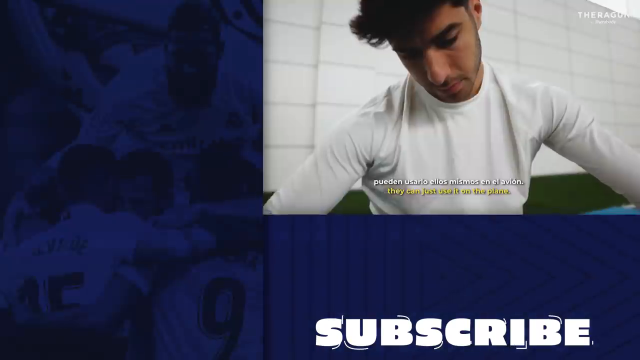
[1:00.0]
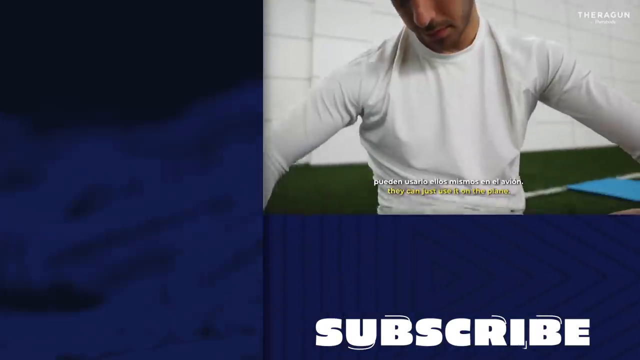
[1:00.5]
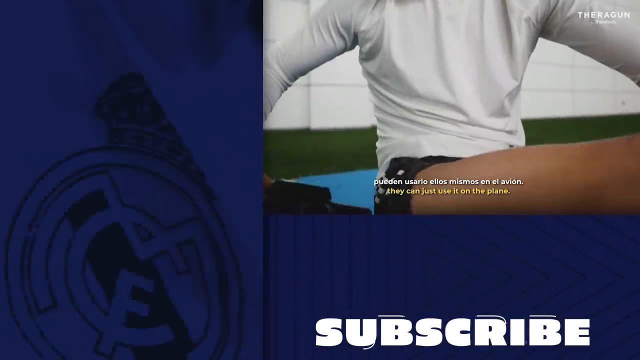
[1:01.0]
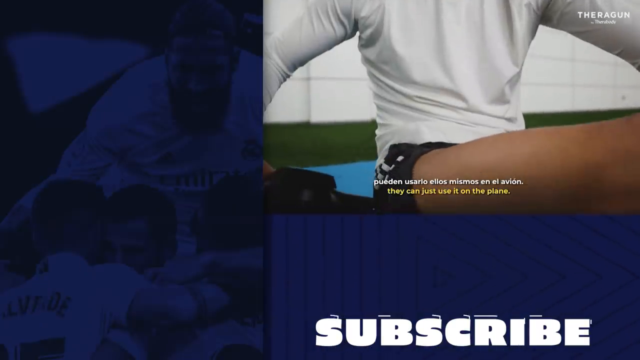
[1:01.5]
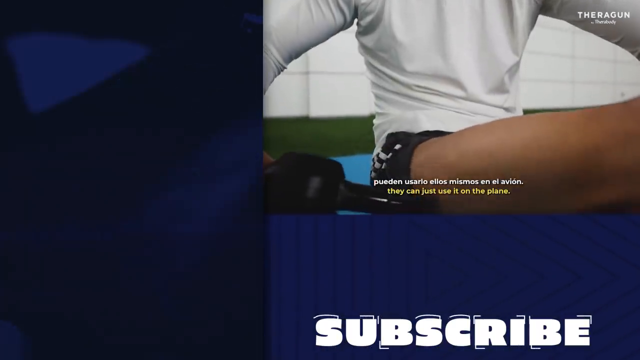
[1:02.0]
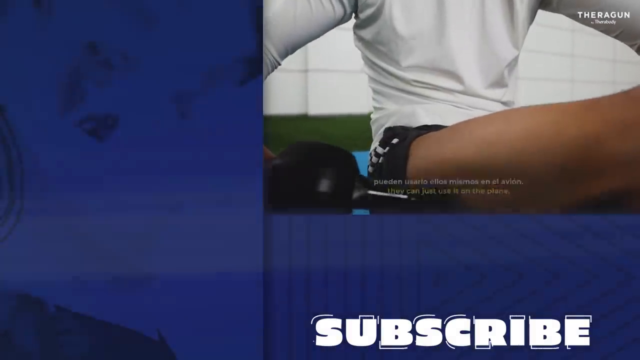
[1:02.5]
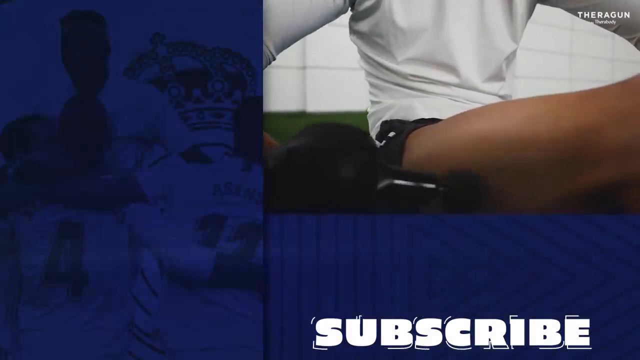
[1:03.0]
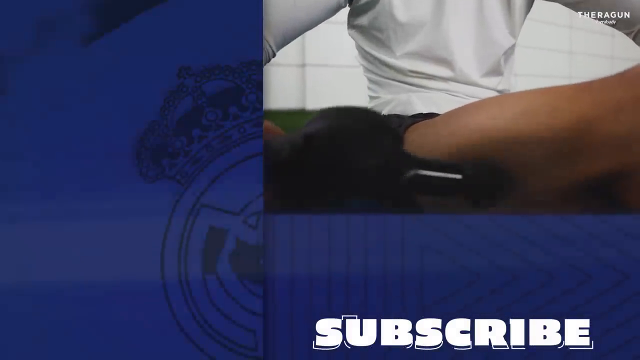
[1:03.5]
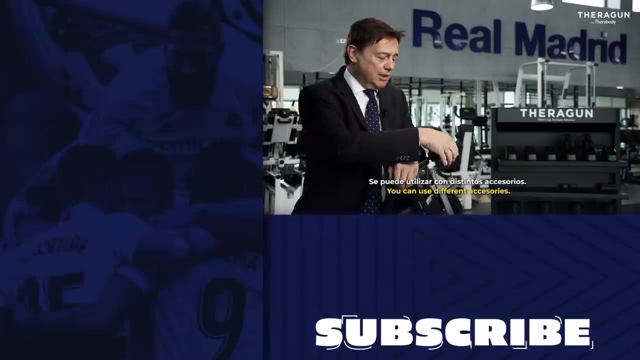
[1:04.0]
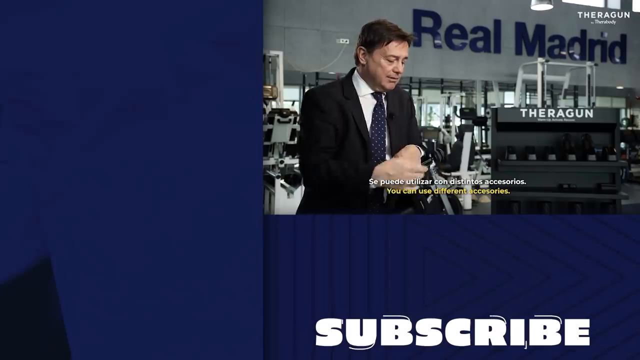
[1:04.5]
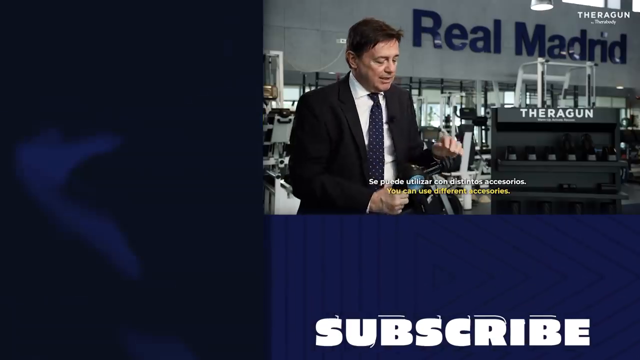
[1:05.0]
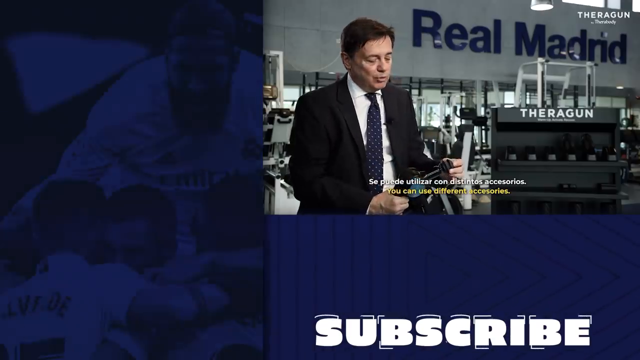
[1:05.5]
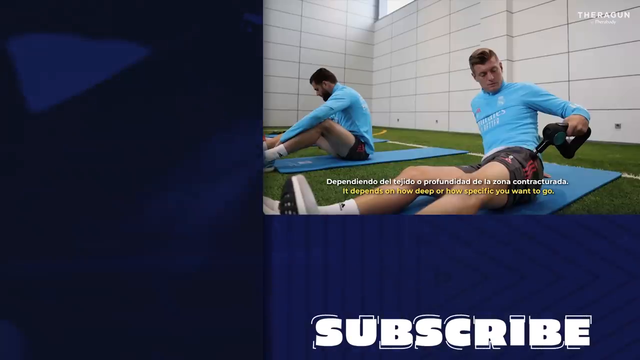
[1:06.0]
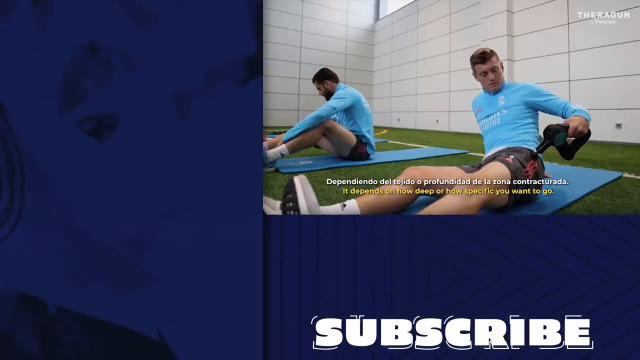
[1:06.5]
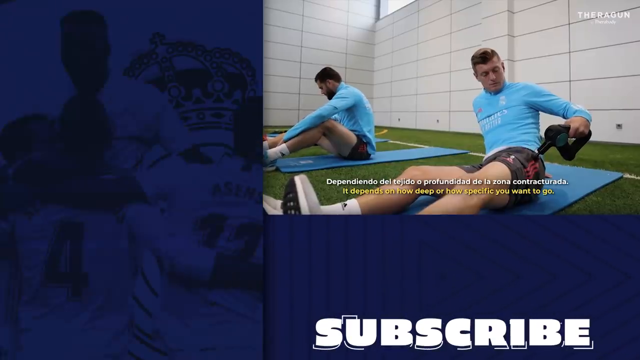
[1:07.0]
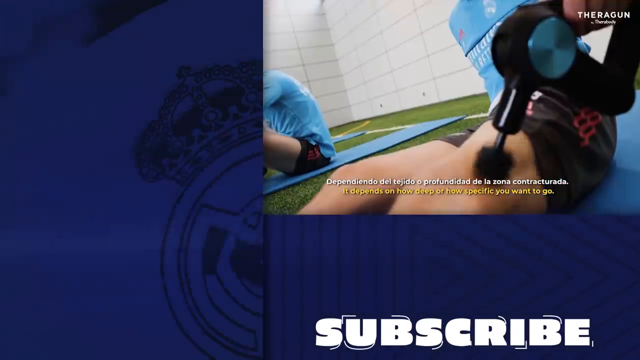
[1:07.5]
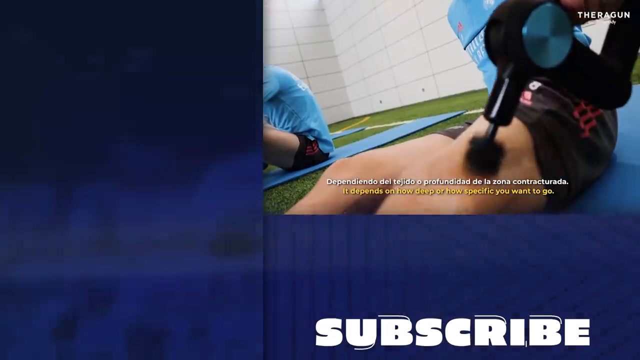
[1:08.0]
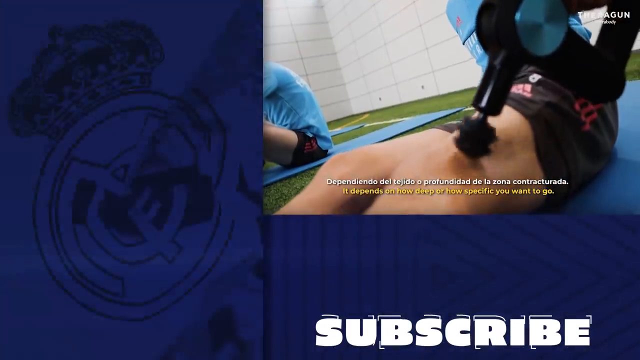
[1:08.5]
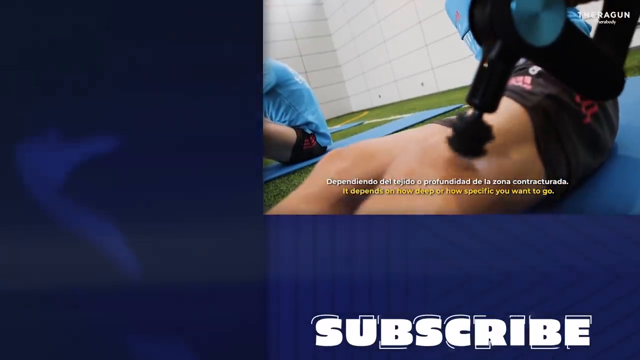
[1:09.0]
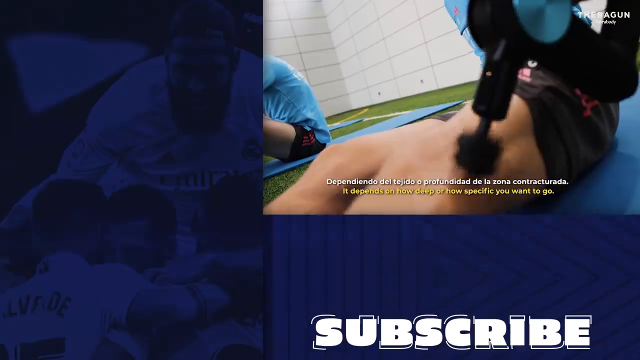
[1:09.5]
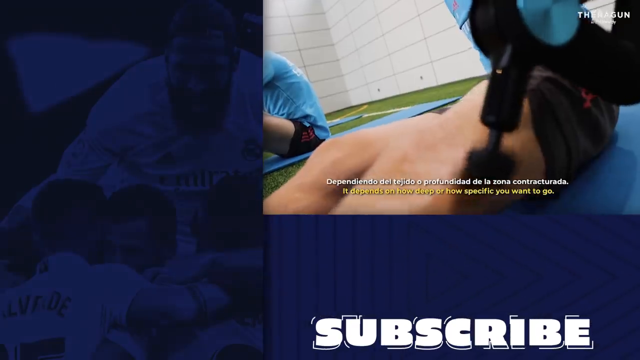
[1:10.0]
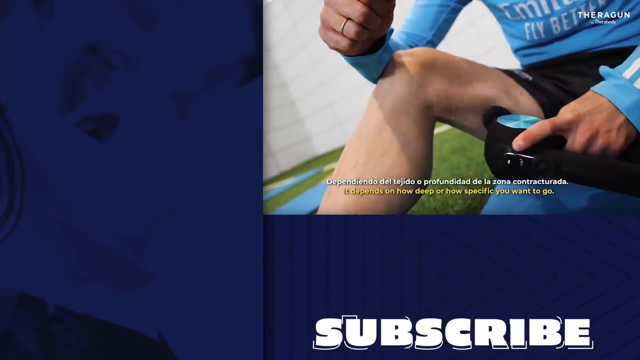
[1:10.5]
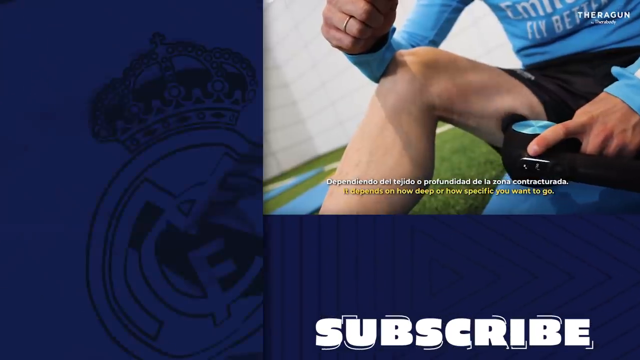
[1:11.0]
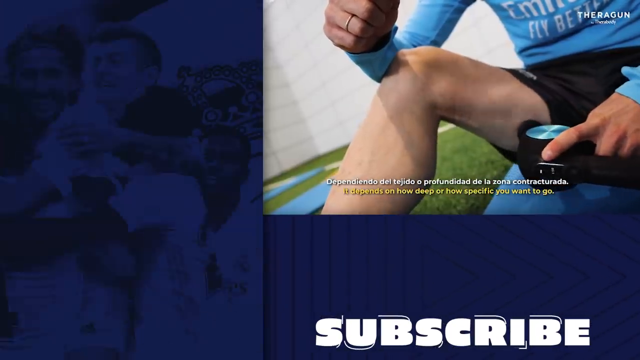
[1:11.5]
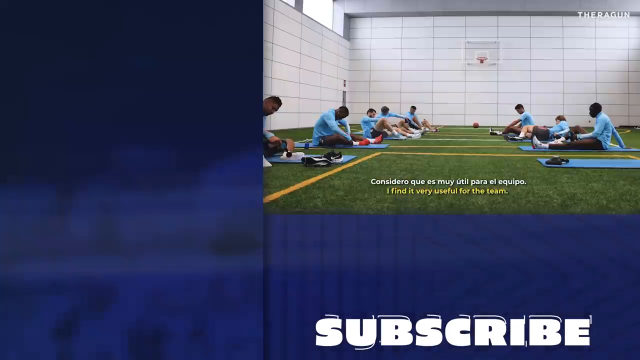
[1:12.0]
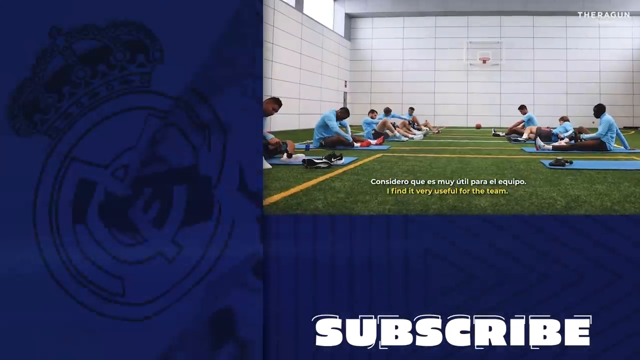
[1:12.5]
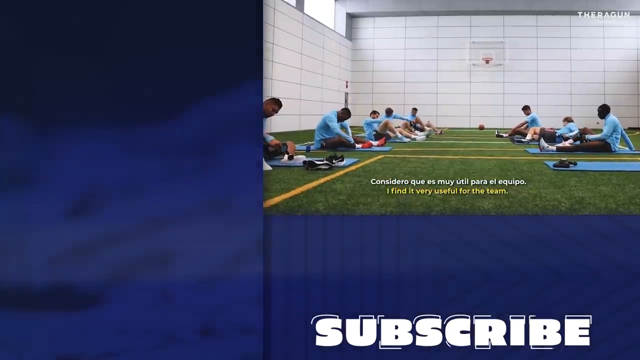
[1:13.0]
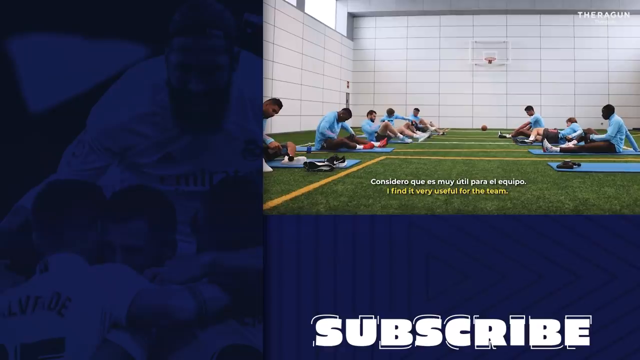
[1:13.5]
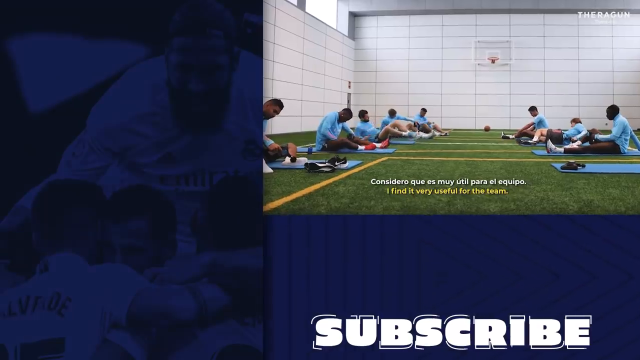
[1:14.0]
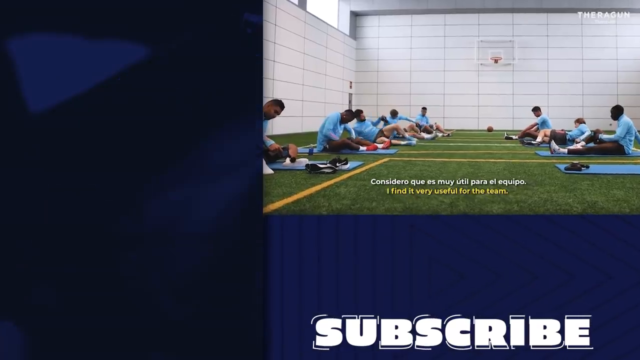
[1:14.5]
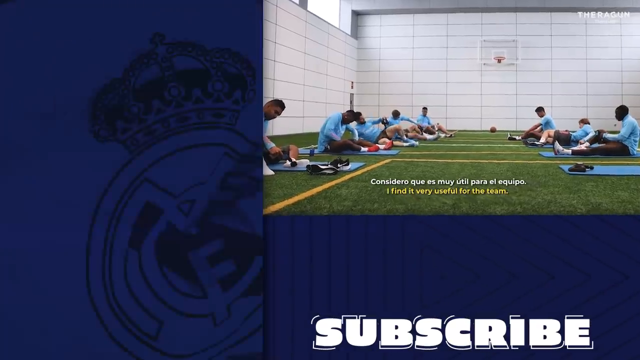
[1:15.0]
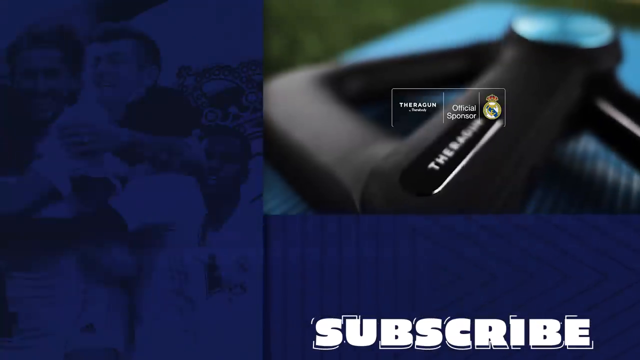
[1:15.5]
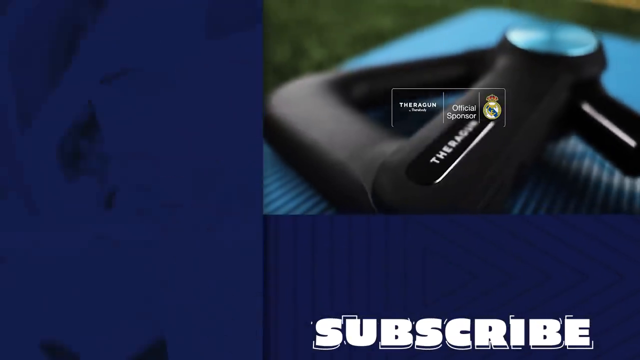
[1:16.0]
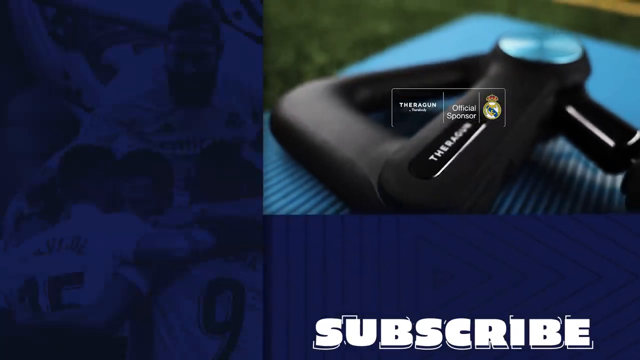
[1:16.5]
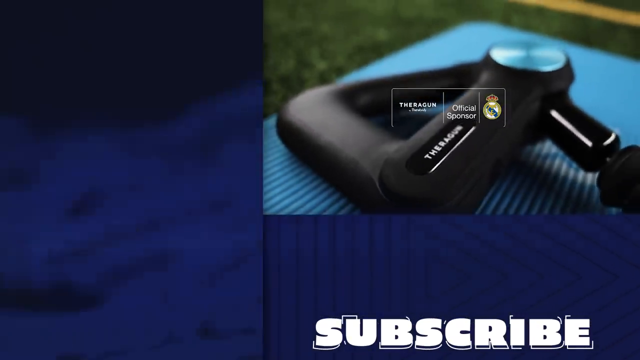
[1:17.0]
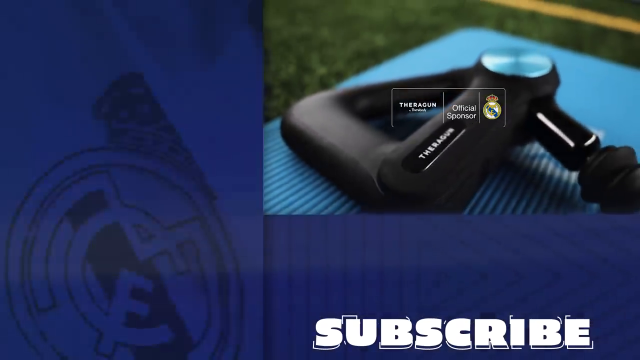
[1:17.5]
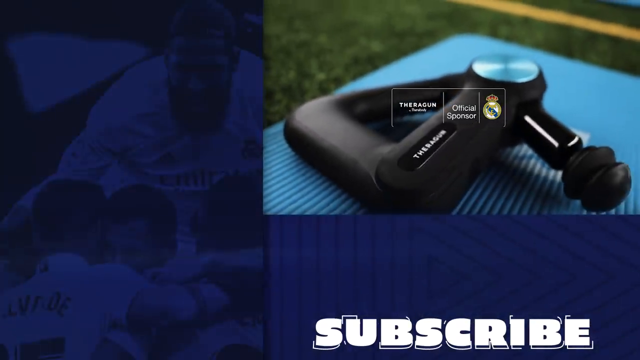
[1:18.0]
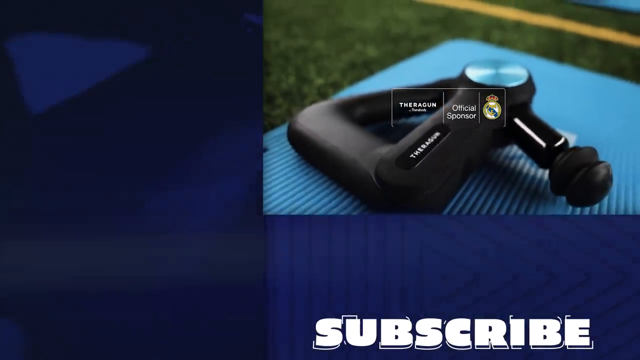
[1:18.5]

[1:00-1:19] A player in a white shirt stares downward with his right leg stretched out, massaging the very bottom of his right thigh, closer to the buttocks, with the Theragun, and moves it forward toward his knee, or the back part of his knee. The man in the suit adjusts something on the Theragun with his left hand while talking. A seated player massages his upper left hip with the massage gun in his left hand, then the part of his left leg closer to the knee. He then massages the inner thigh of his right leg, his right arm resting on his right knee. A group of players massages themselves with the Theragun. The camera zooms out on the Theragun, and wording reads "Theragun Official Sponsor", with a logo on the right.